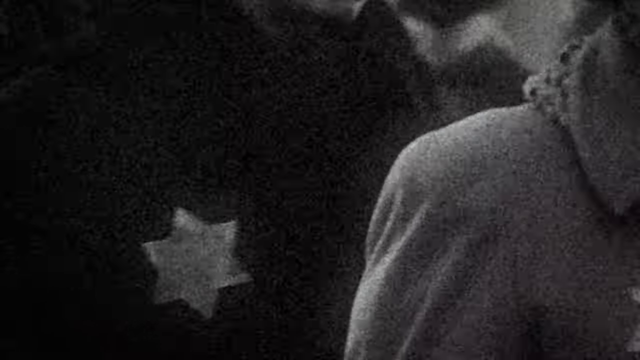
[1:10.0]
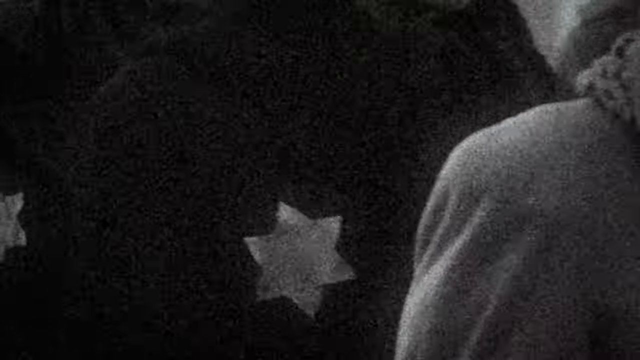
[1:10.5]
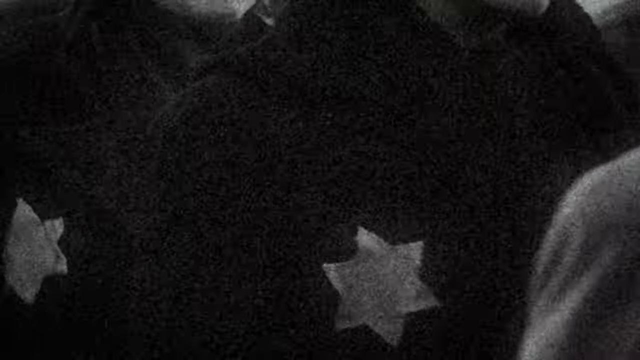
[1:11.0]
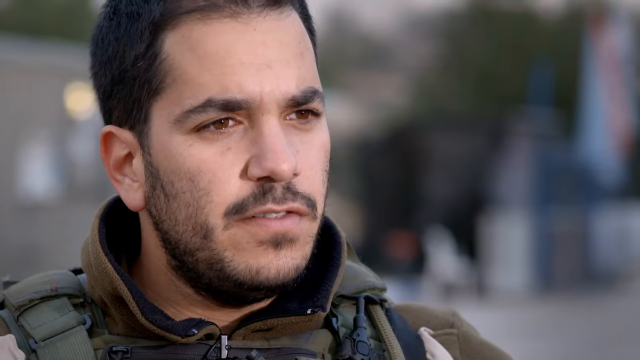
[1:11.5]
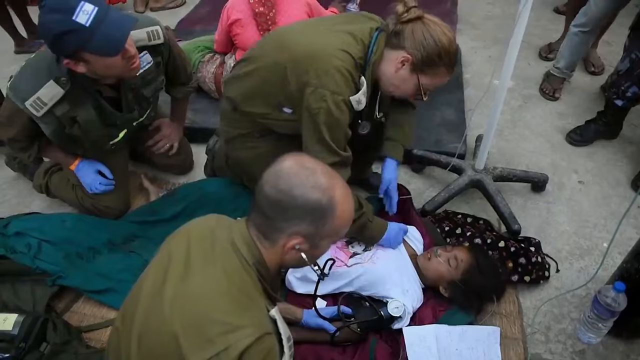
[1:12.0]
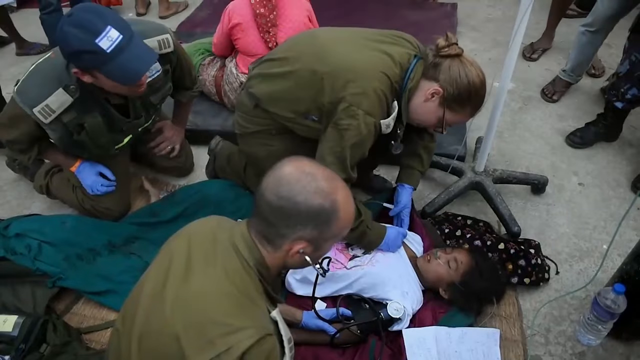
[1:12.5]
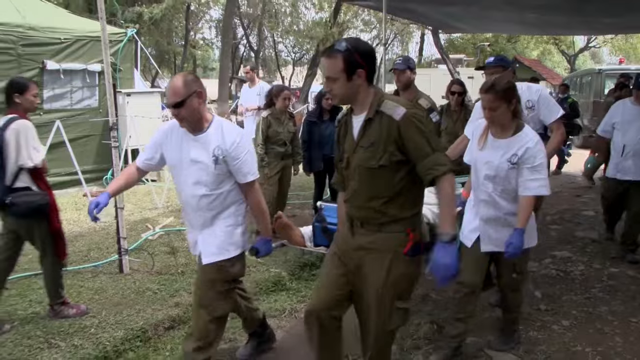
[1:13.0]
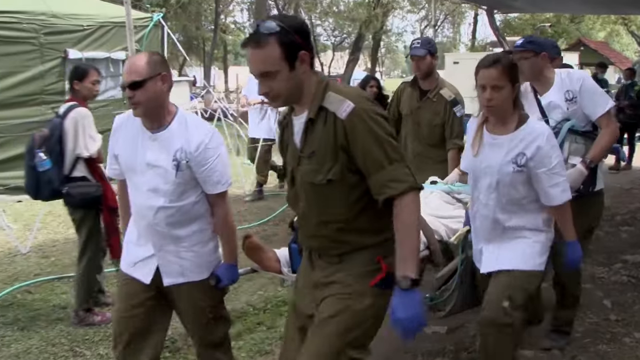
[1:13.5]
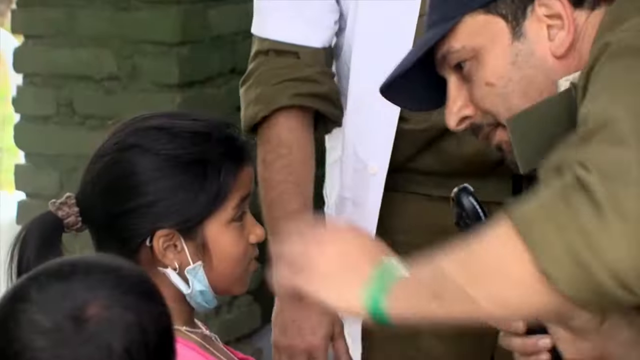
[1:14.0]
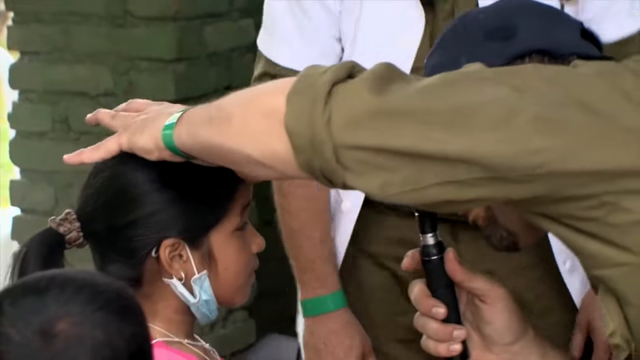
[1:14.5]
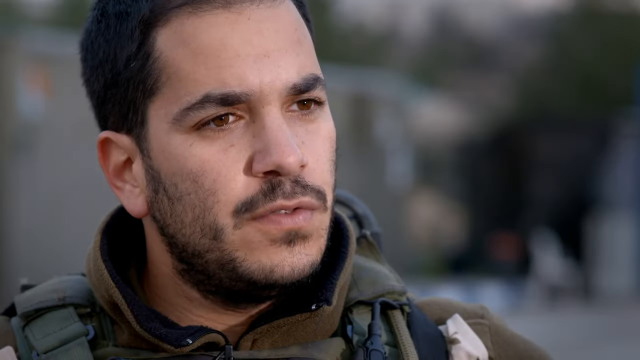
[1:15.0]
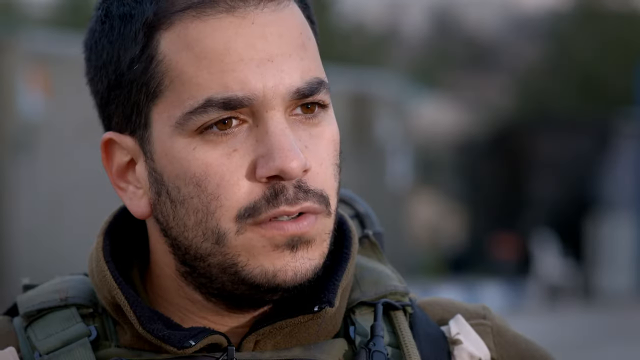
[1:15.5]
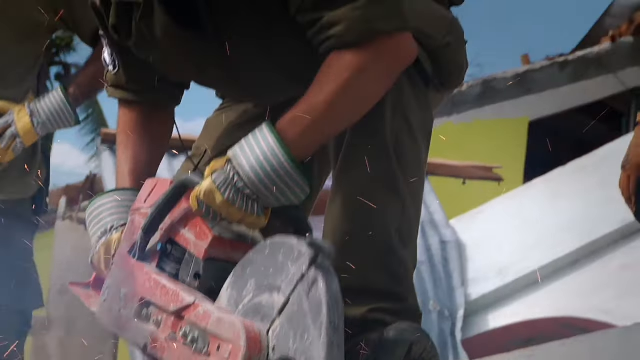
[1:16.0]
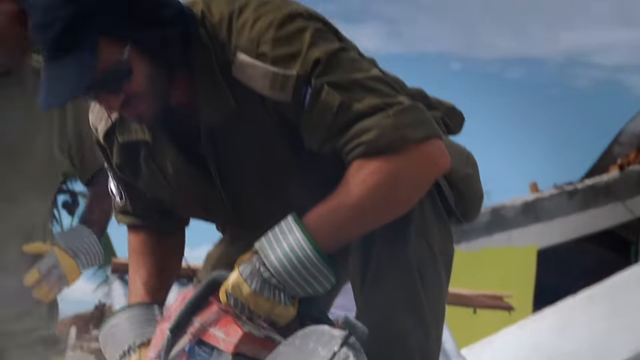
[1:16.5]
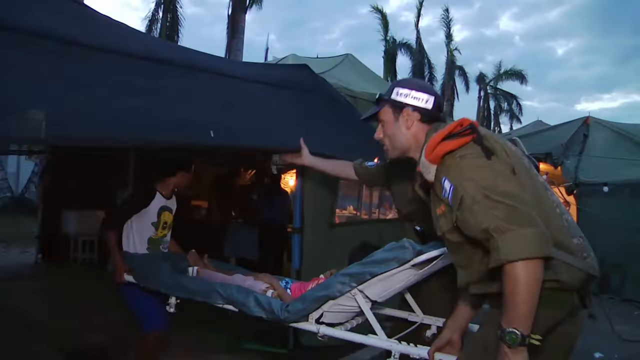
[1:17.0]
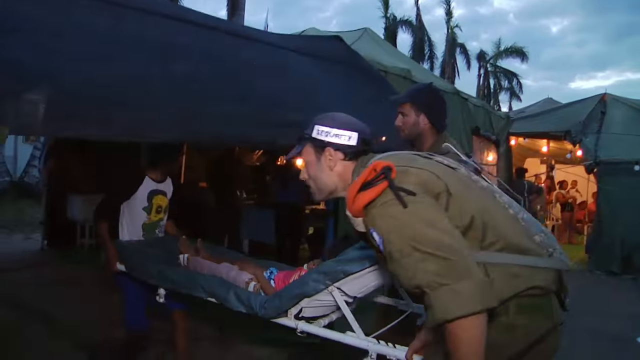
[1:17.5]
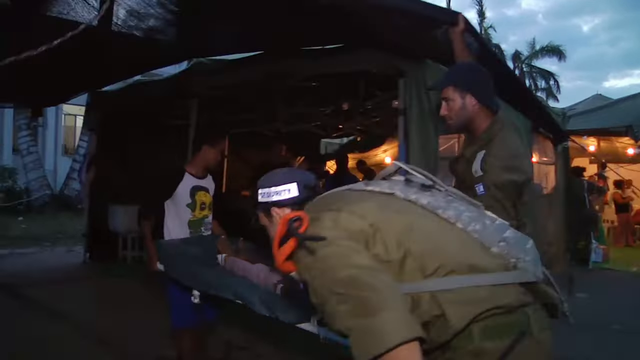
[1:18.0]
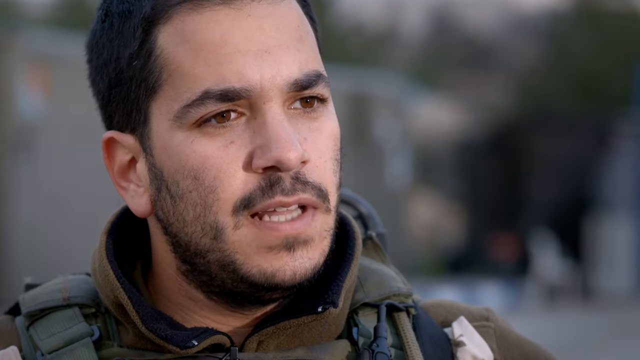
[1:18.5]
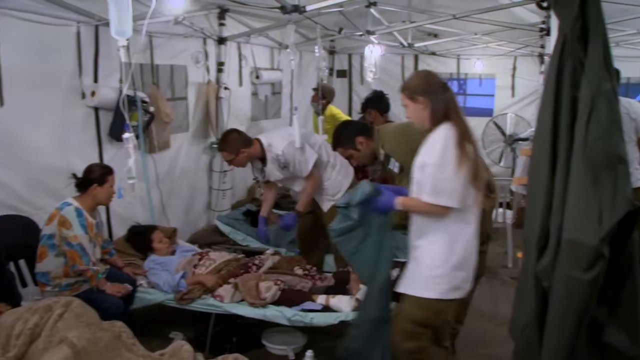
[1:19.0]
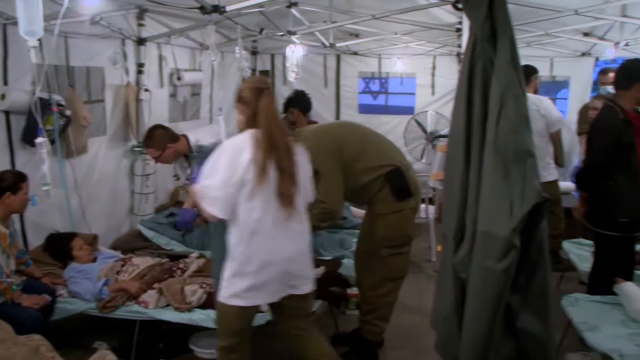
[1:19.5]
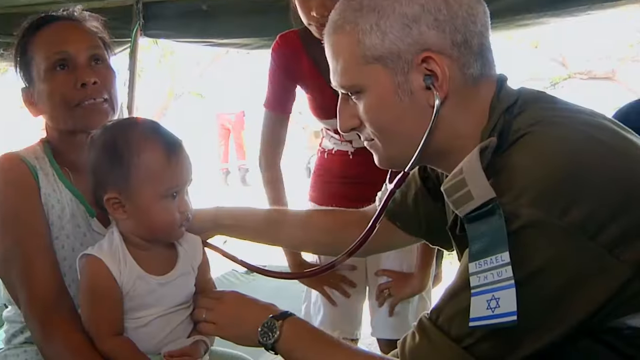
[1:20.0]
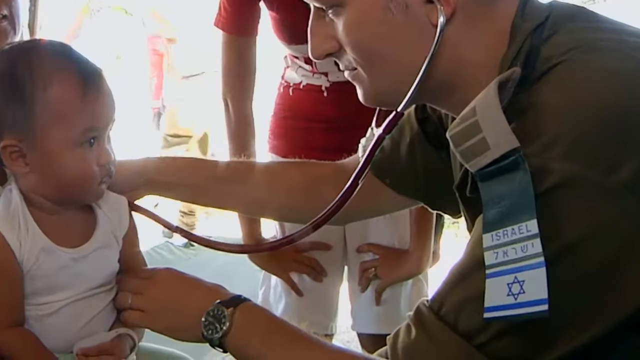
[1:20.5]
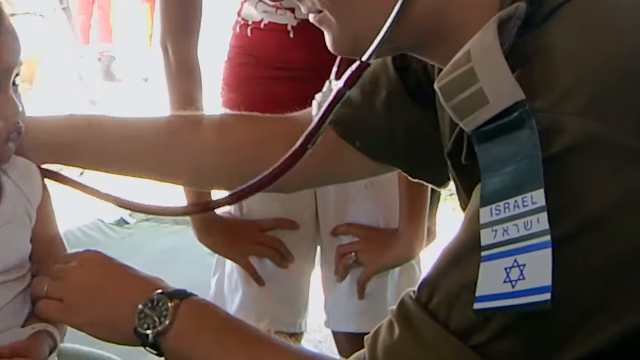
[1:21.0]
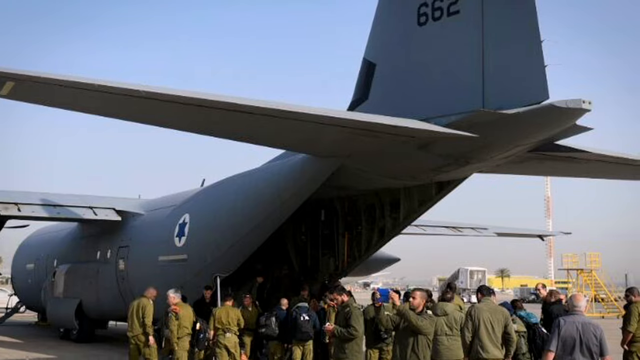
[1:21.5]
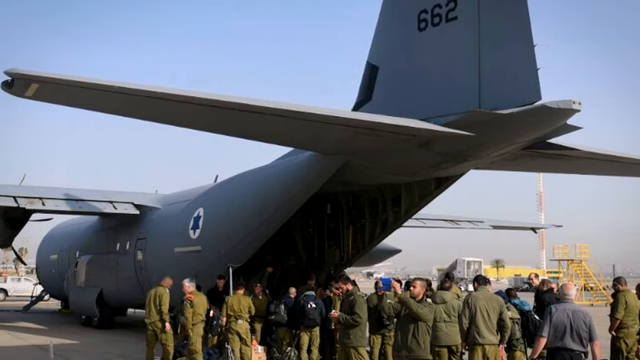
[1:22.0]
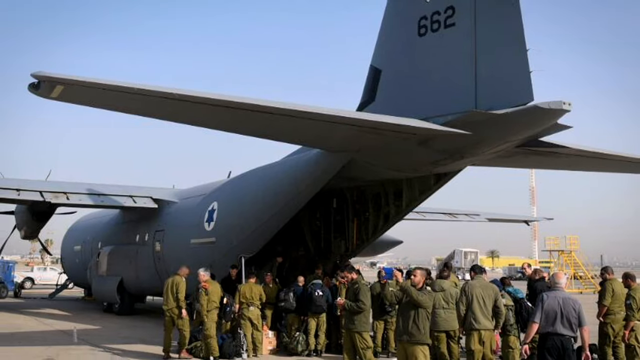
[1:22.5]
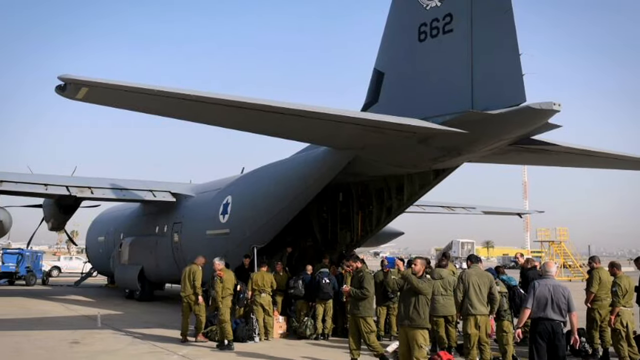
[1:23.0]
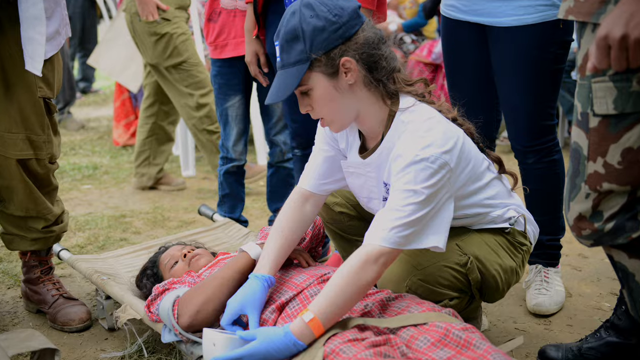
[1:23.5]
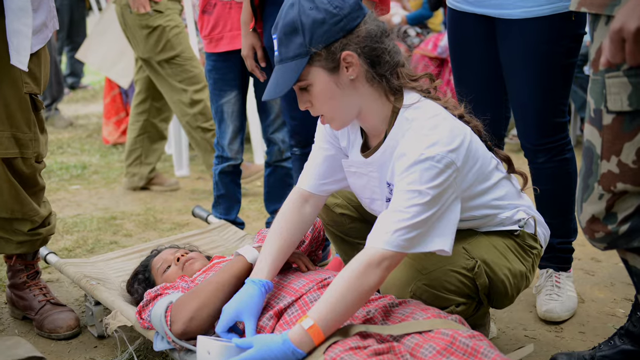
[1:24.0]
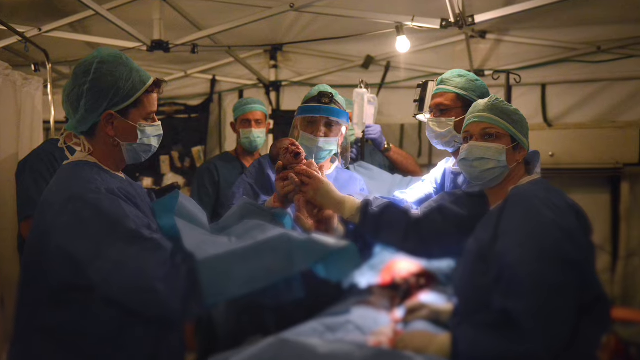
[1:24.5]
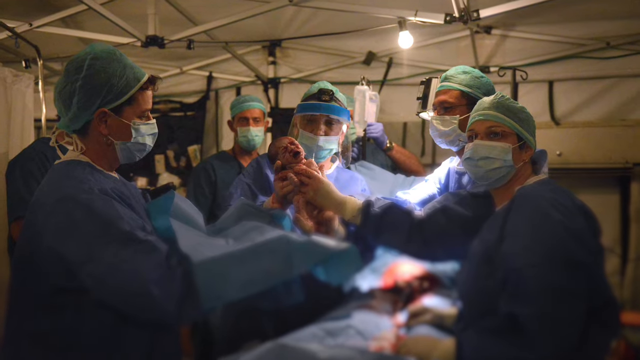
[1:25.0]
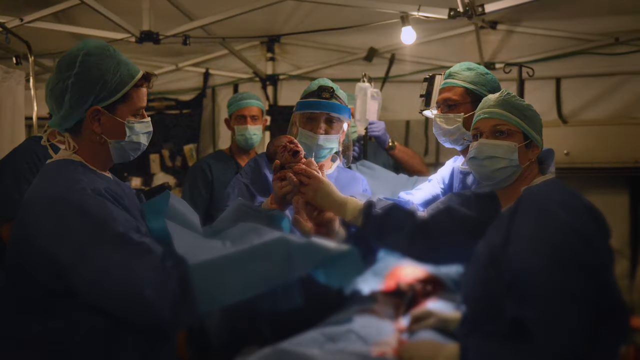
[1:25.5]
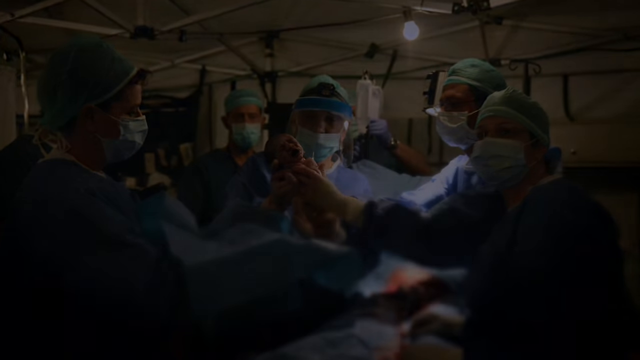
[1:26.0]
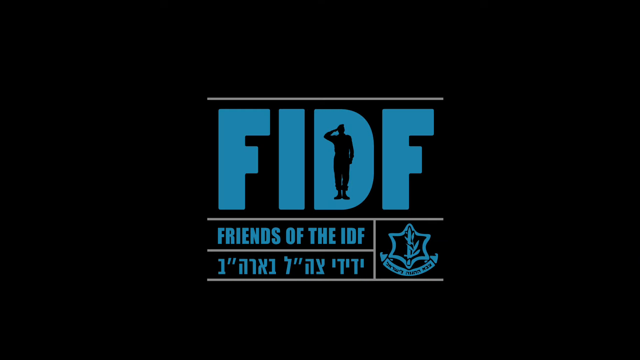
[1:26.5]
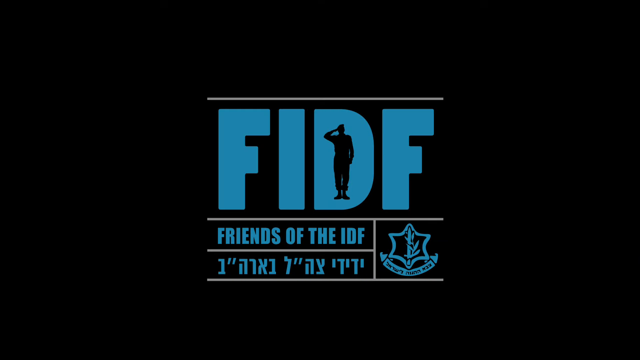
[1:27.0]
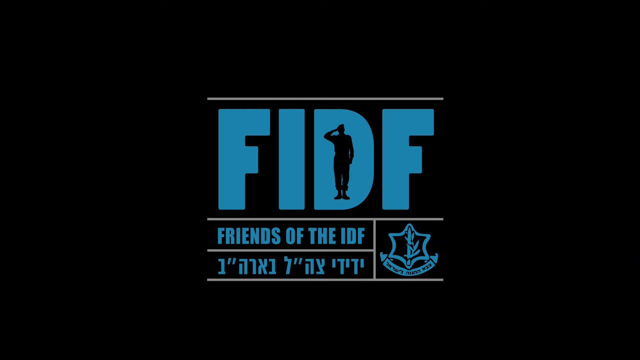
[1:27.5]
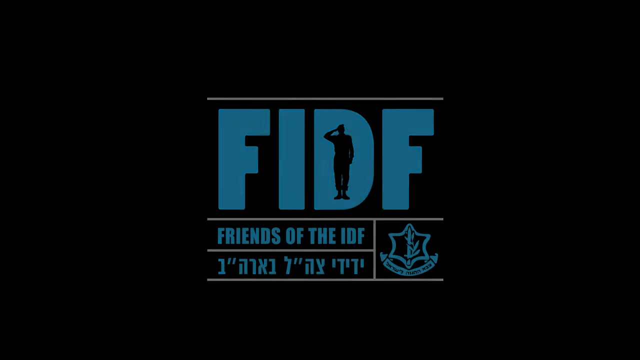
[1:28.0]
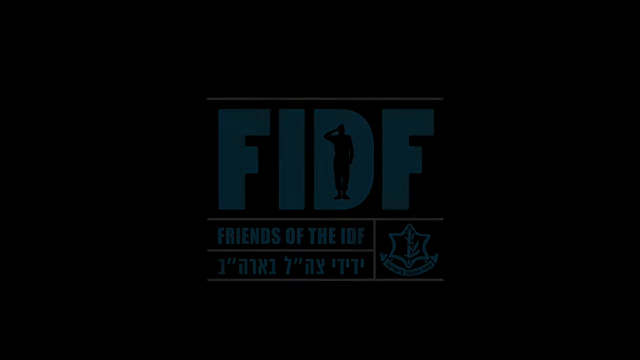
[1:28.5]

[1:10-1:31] Grainy black-and-white images from an old time give way to flashes of several images from modern wartime. A young girl with dark hair lies on the ground, attended by medical professionals, with someone wearing a white shirt; her eyes are closed and she has a breathing tube on her nose. People carry a stretcher between them. A girl with her dark hair pulled up into a ponytail is seen in profile facing right, being examined by a man in a brown shirt. More flashes follow: a young child on a stretcher is carried into an army green tent, the Major speaks to the camera, and the inside of a makeshift hospital appears. A big plane holds a lot of people wearing army gray uniforms, a child lies on a stretcher on the ground, and a group of doctors in blue scrubs holds up a newborn baby with its mouth open, crying. Finally, on a black background, blue text reads "FIDF" with "friends of the IDF" underneath, followed by something written in what looks like Middle Eastern script, and the video fades to black.